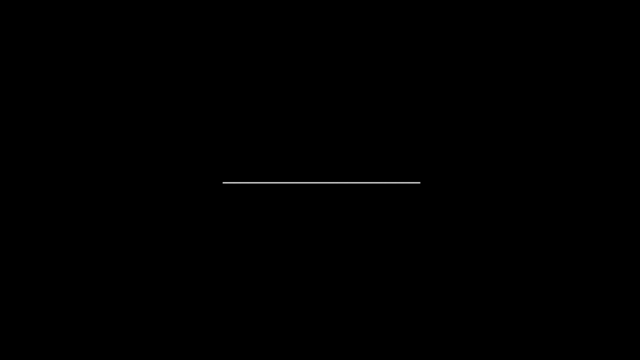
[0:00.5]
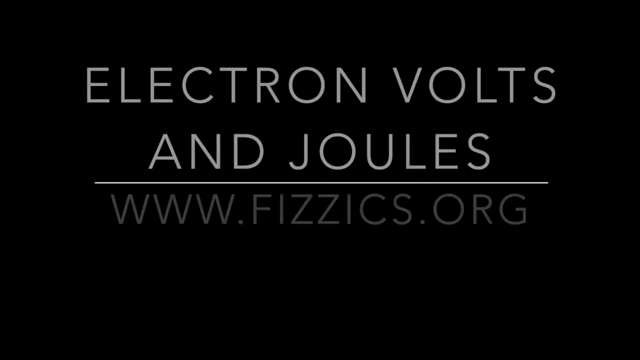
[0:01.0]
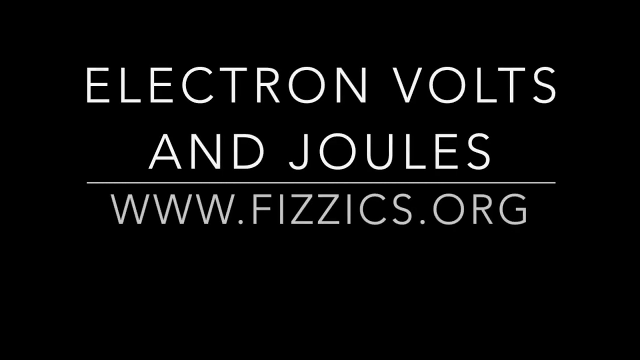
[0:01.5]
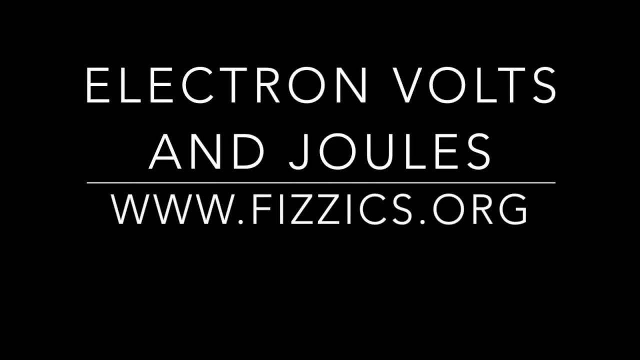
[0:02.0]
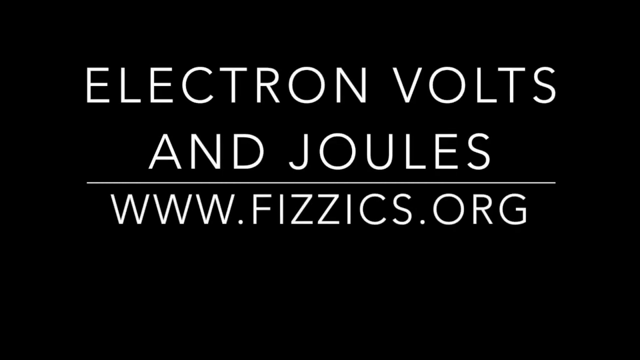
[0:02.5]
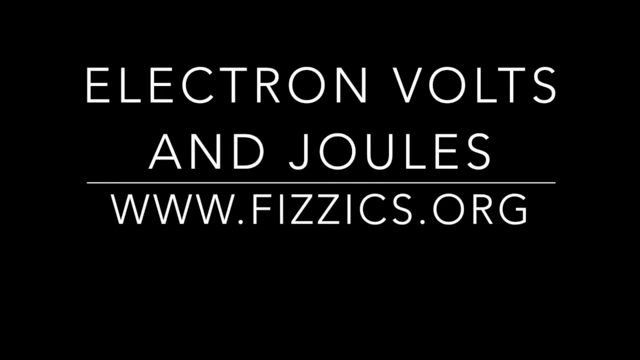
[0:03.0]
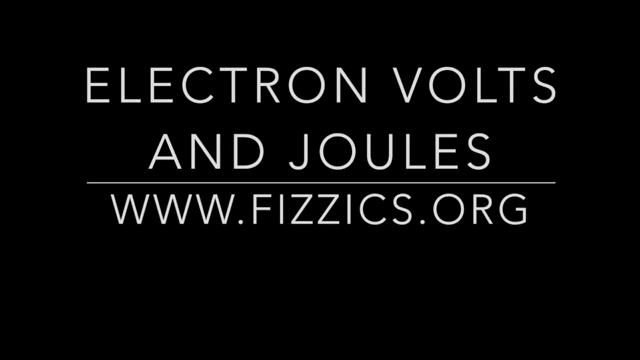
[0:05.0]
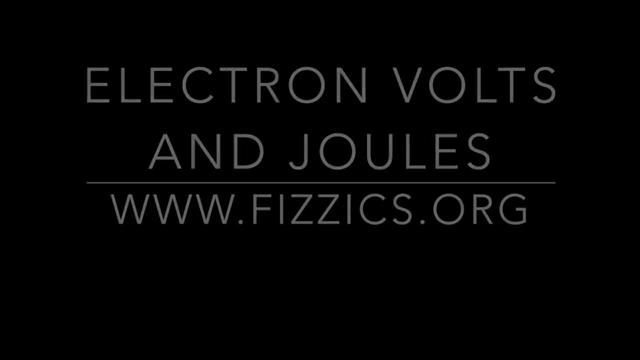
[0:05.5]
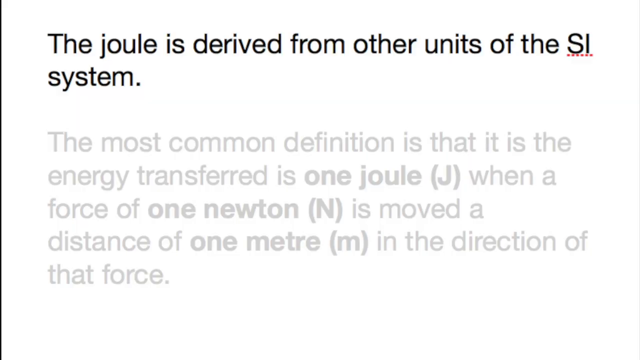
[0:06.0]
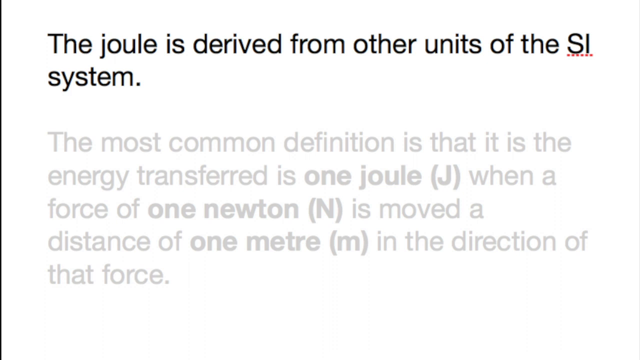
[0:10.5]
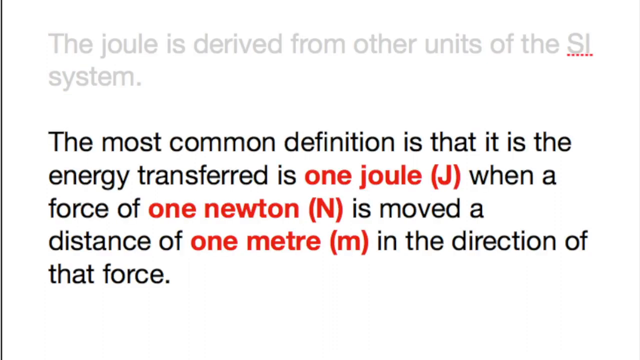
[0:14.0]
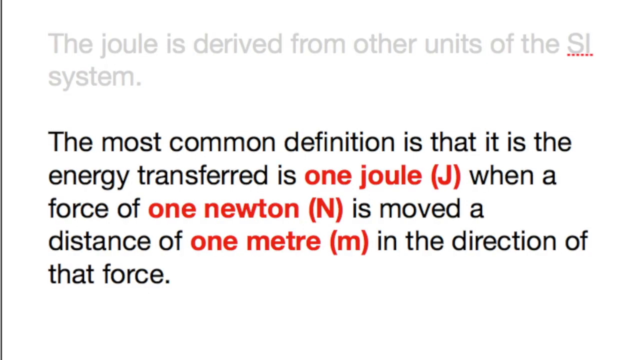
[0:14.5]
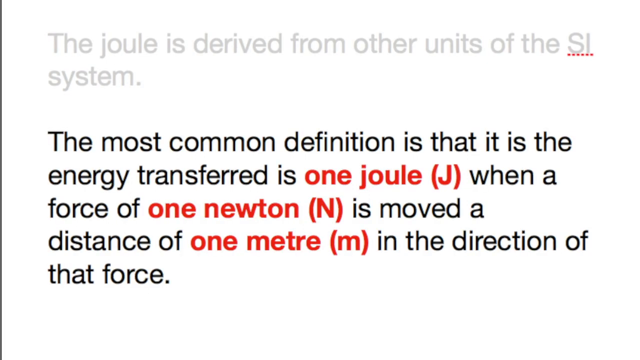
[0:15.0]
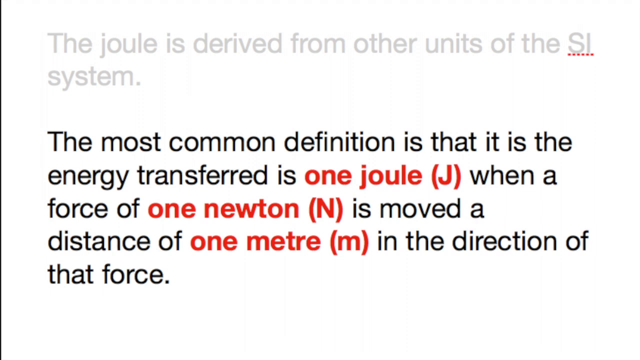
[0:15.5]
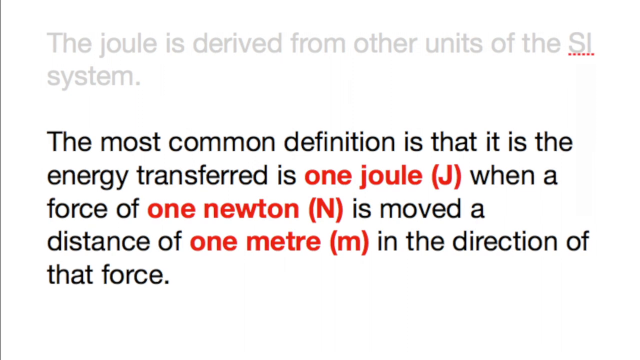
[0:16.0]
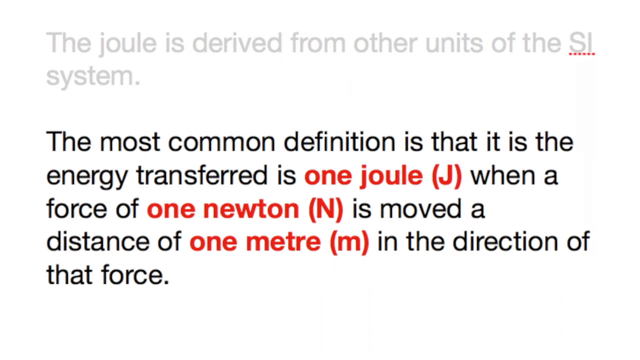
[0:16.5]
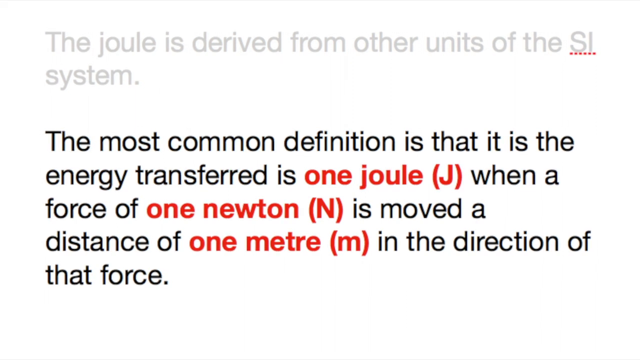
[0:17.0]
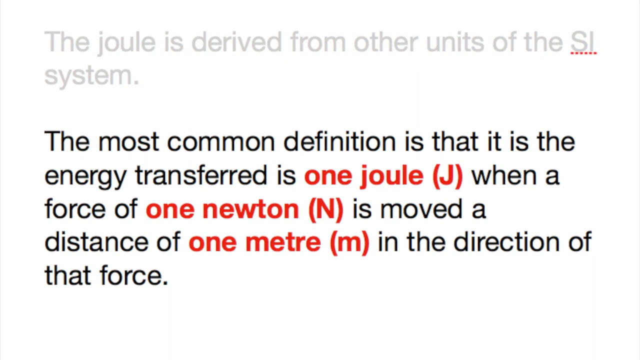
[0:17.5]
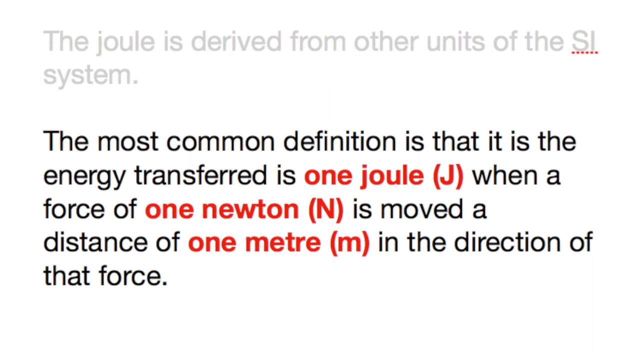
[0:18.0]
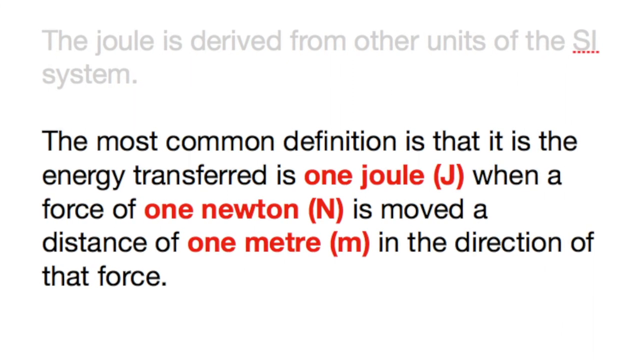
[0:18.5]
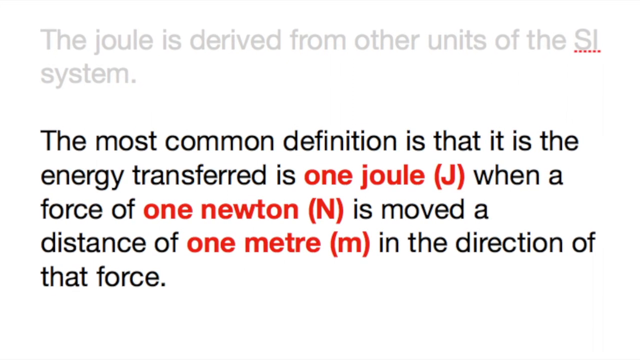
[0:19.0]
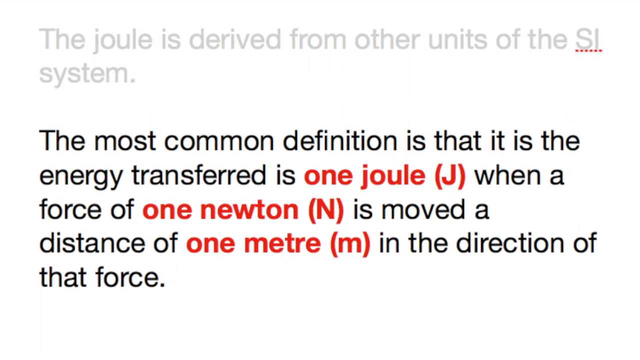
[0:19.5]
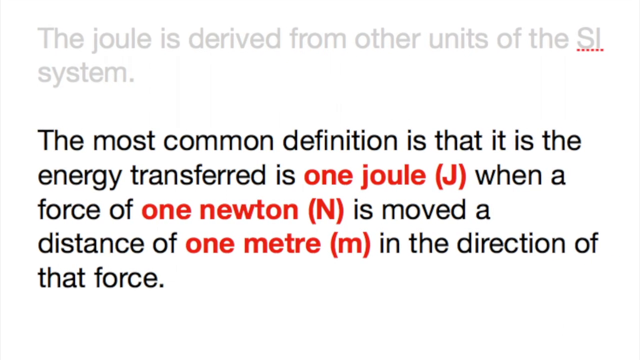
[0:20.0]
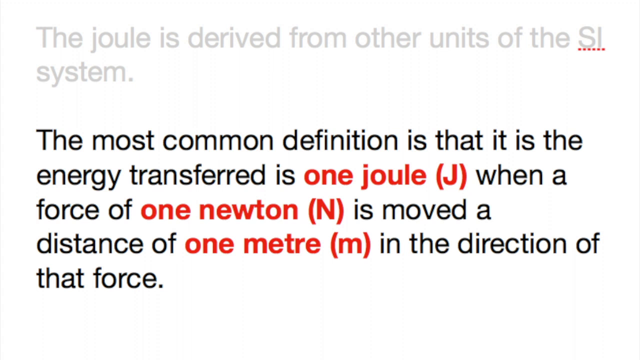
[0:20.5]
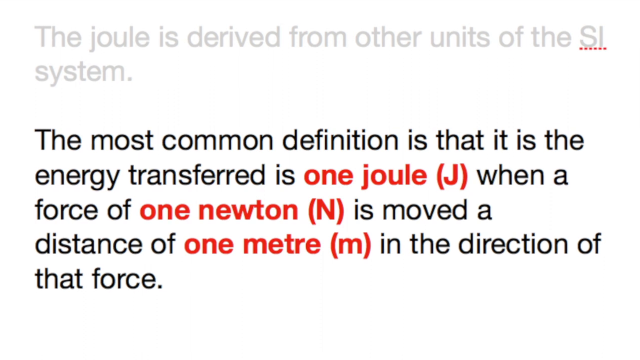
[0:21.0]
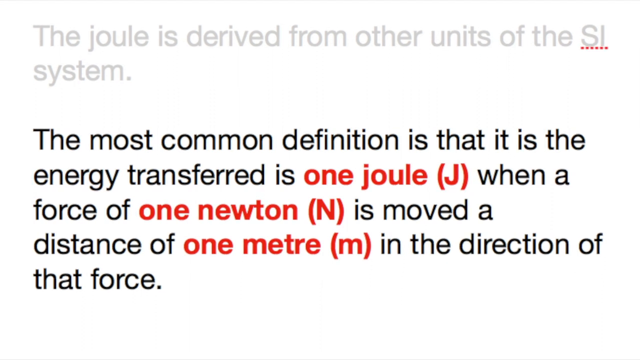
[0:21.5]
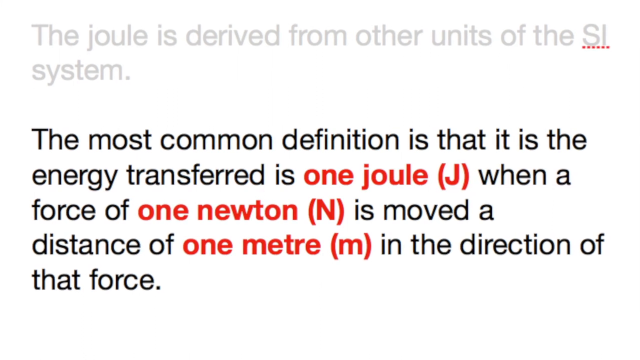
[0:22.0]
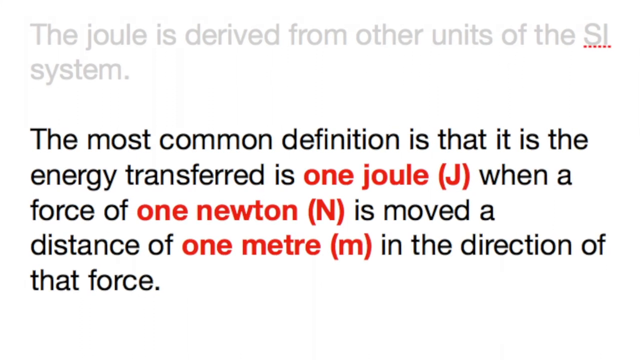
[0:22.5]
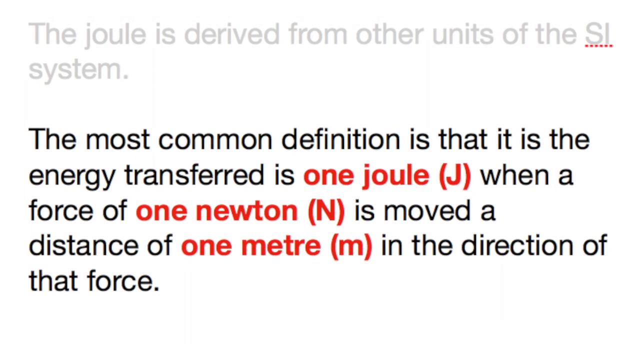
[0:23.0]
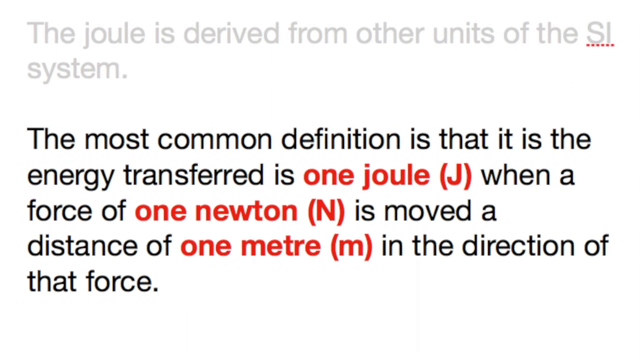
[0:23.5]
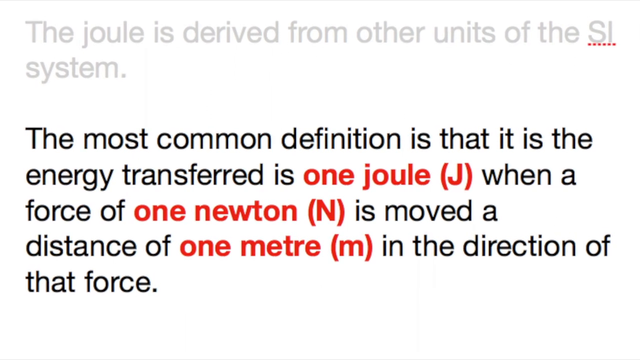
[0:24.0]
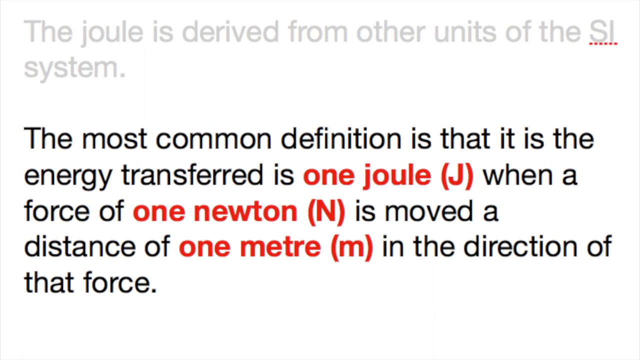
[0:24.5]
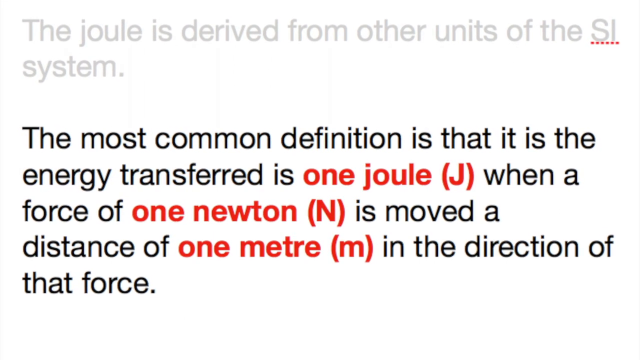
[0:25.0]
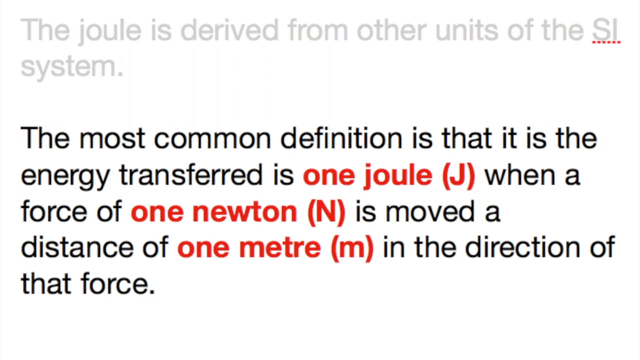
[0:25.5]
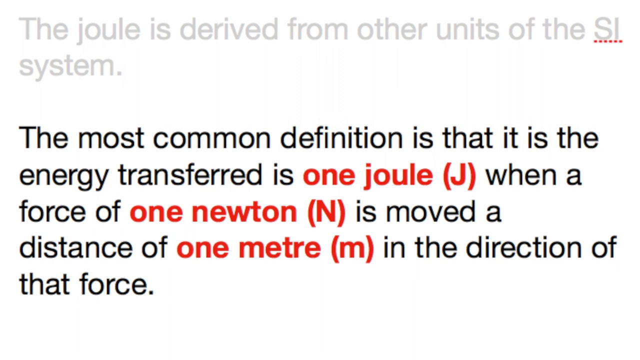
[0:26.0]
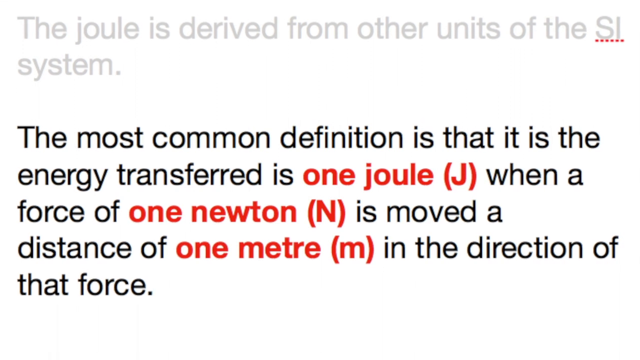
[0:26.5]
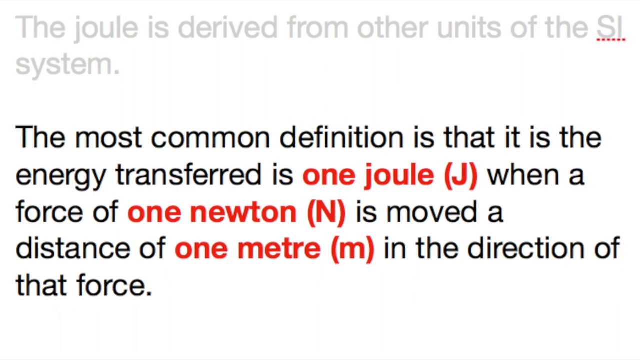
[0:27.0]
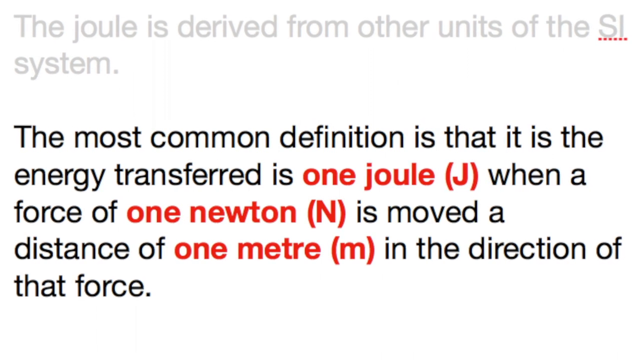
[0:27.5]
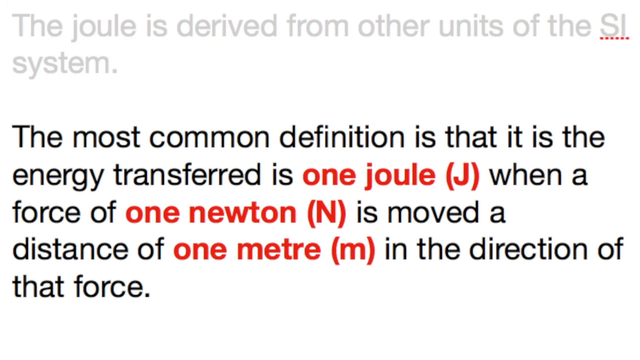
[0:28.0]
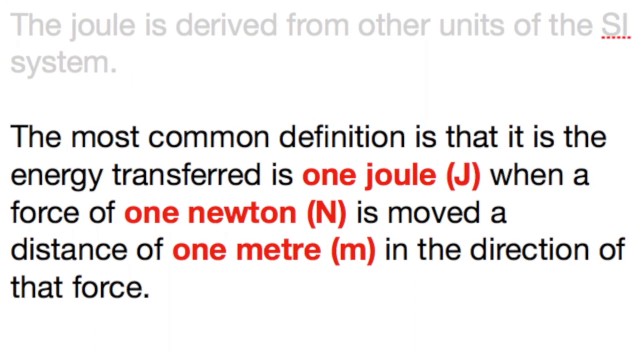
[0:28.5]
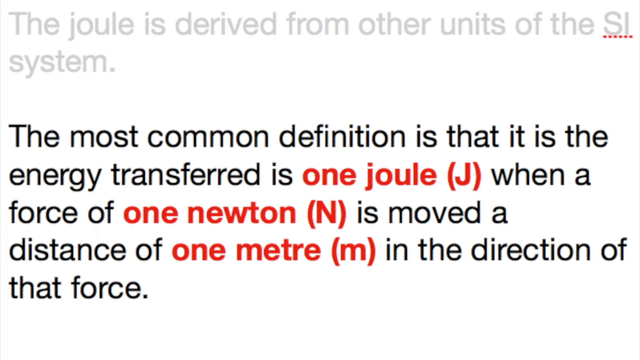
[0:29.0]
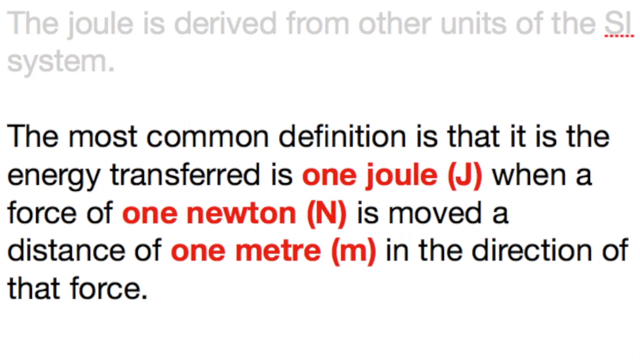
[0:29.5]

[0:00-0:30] On-screen text refers to the joule and gives its most common definition, relating it to a transfer over a distance in the direction of a force.